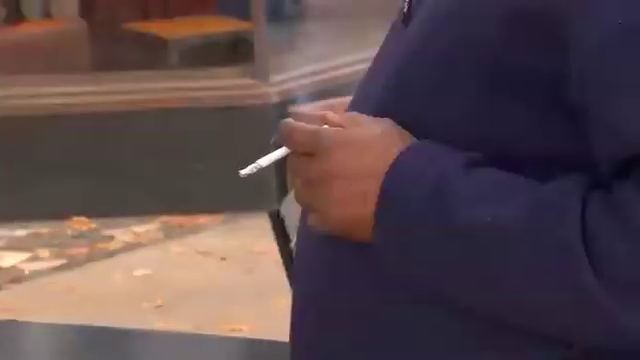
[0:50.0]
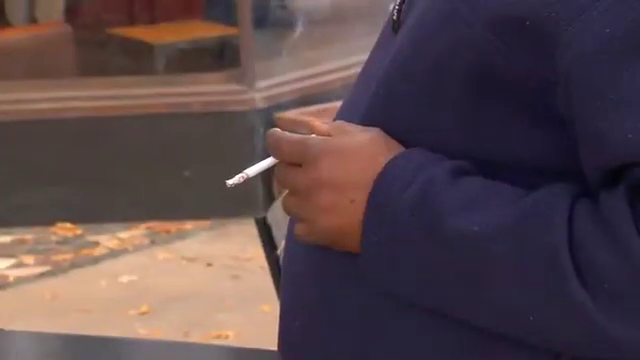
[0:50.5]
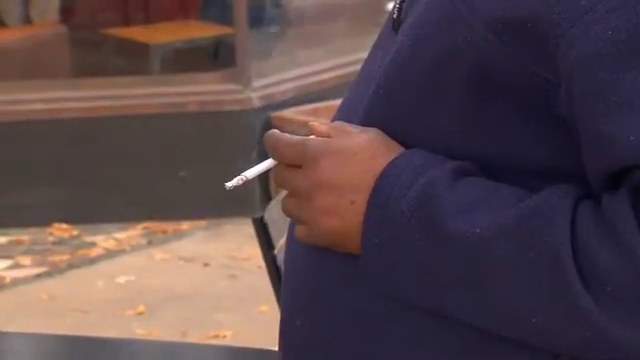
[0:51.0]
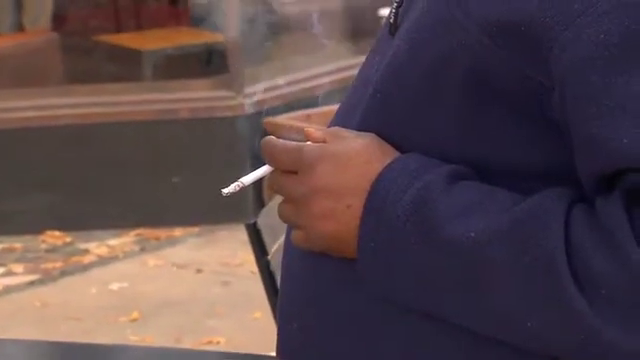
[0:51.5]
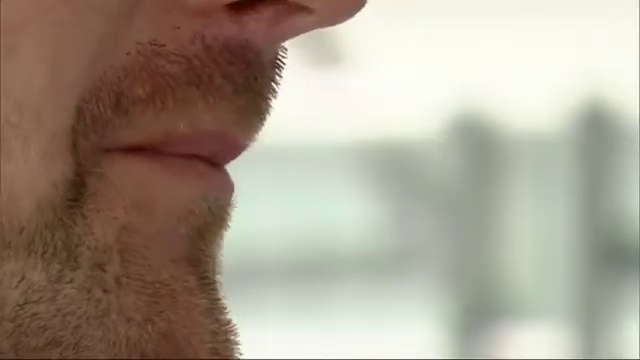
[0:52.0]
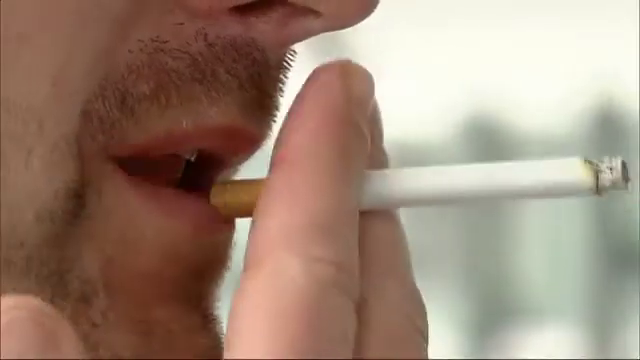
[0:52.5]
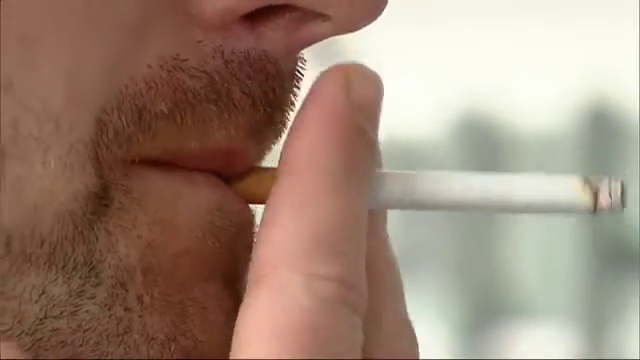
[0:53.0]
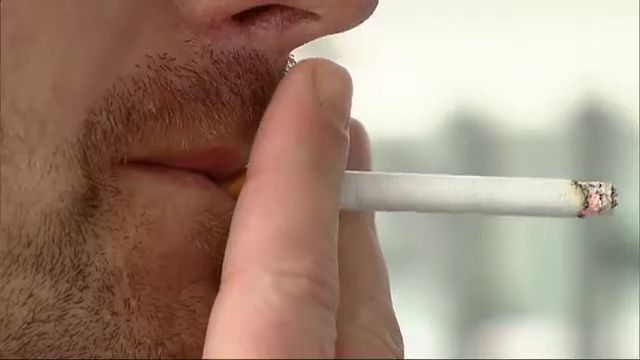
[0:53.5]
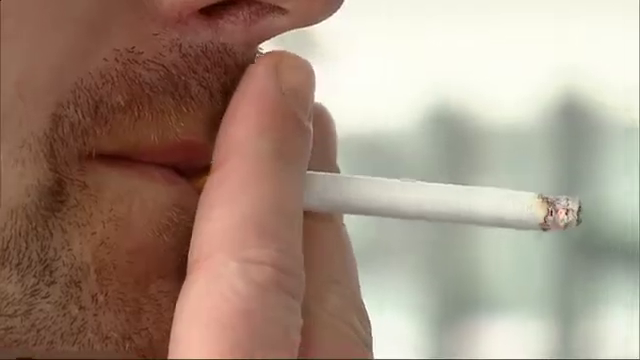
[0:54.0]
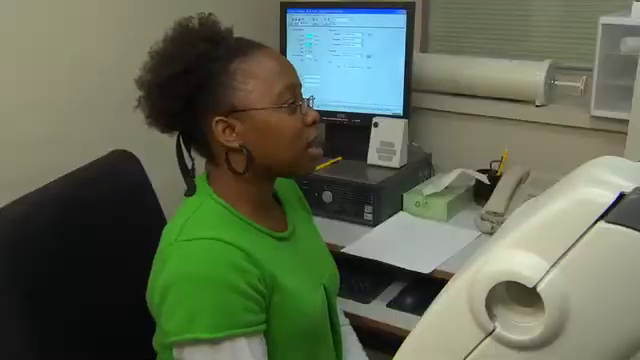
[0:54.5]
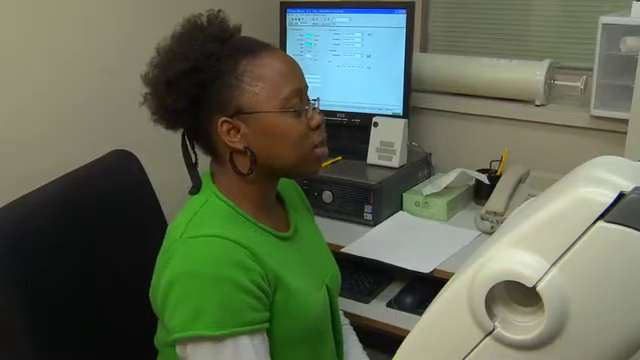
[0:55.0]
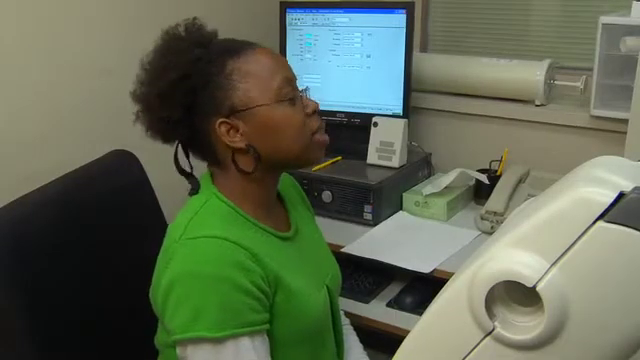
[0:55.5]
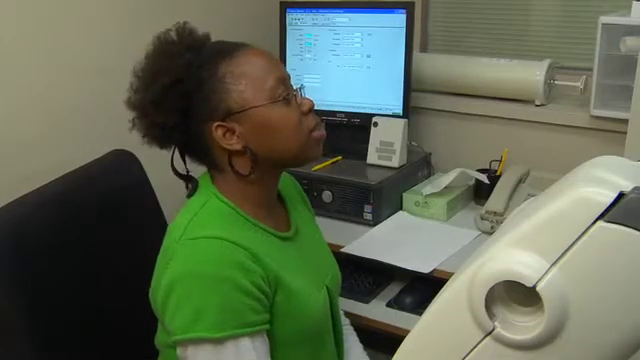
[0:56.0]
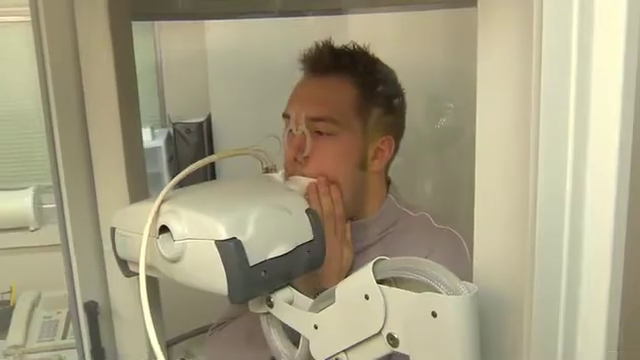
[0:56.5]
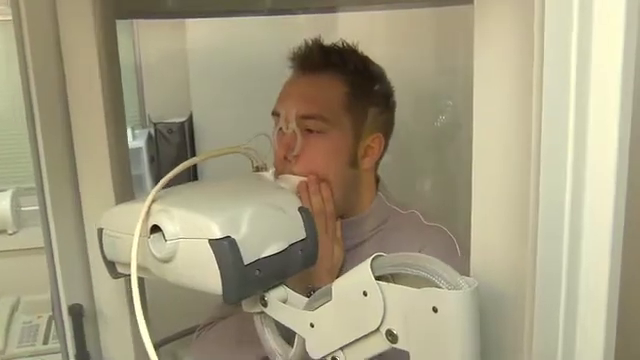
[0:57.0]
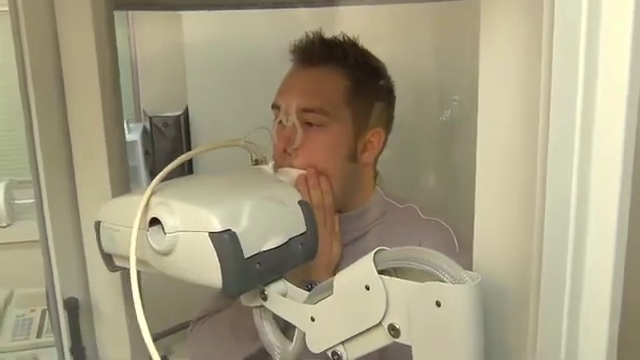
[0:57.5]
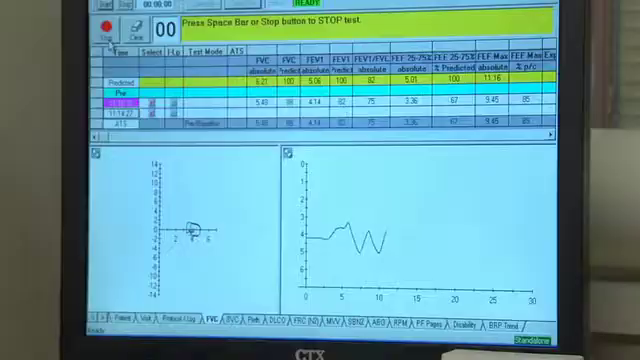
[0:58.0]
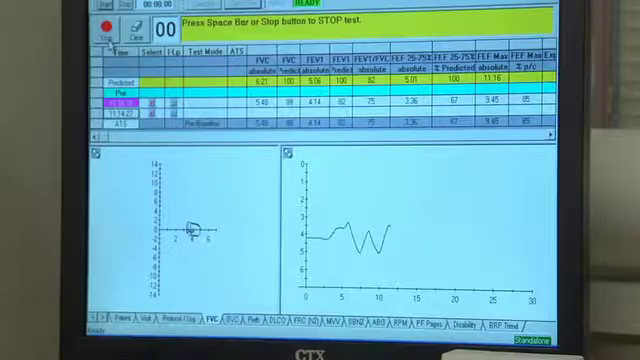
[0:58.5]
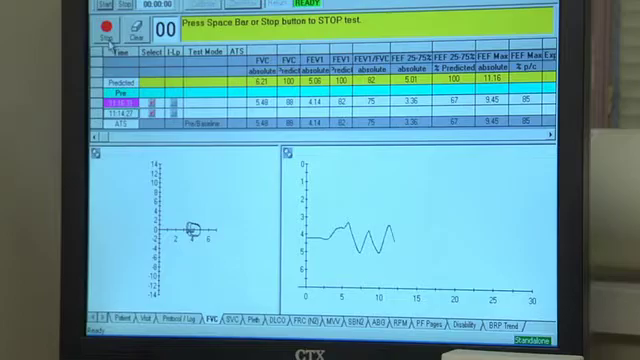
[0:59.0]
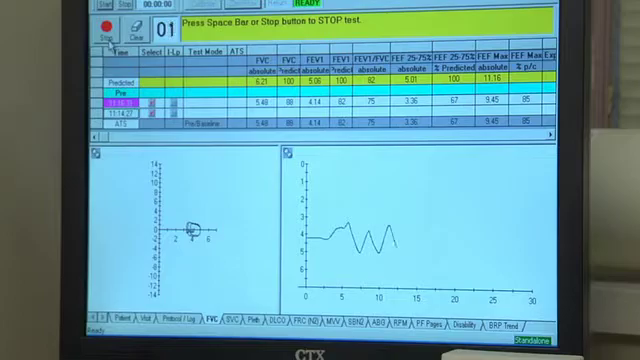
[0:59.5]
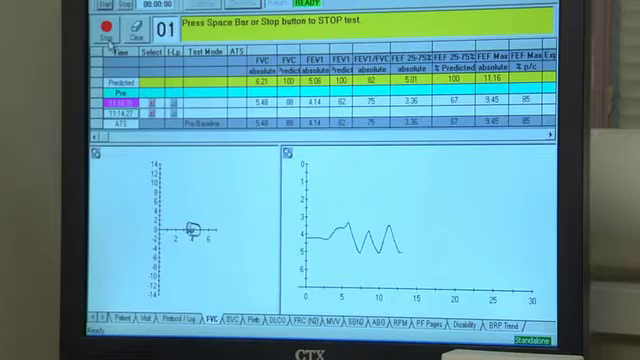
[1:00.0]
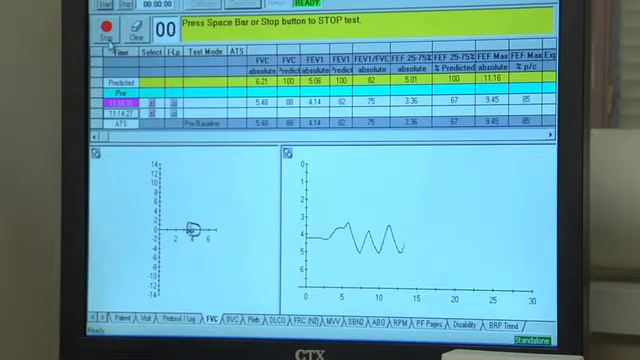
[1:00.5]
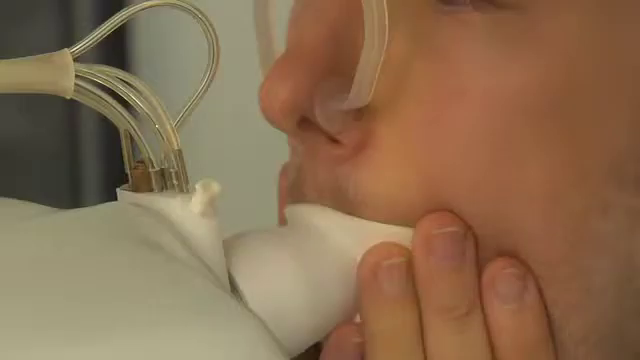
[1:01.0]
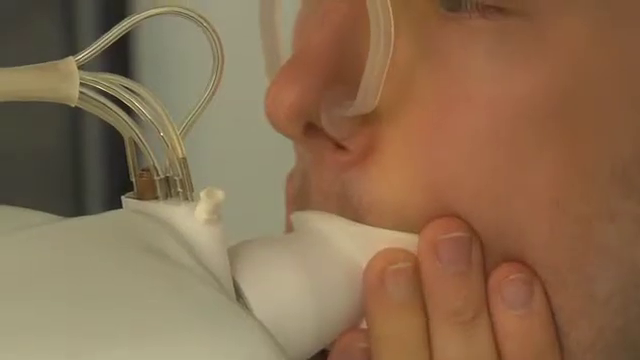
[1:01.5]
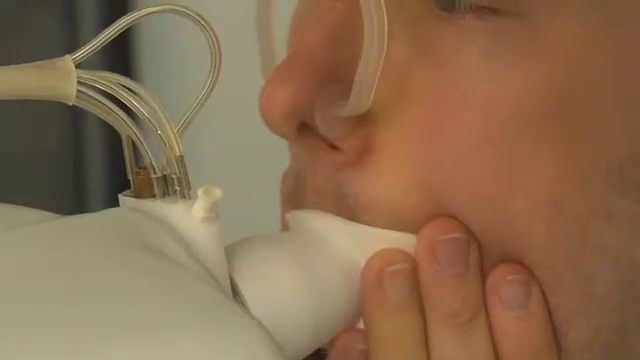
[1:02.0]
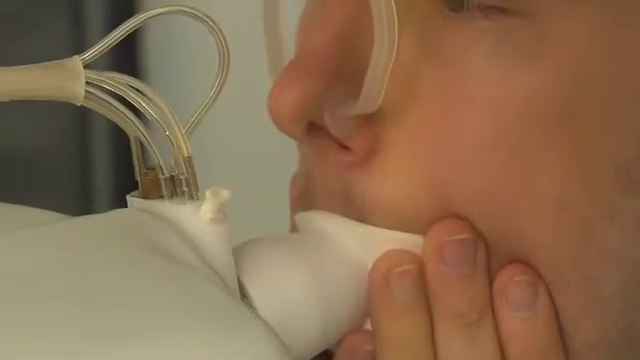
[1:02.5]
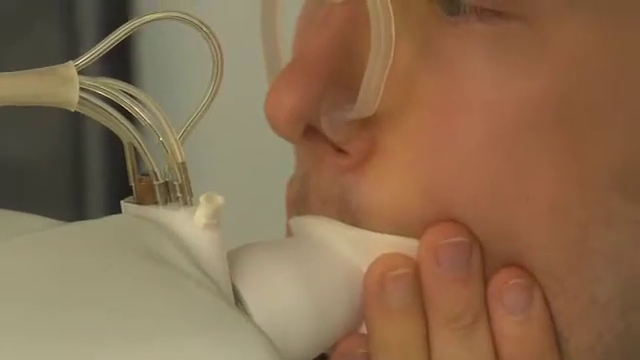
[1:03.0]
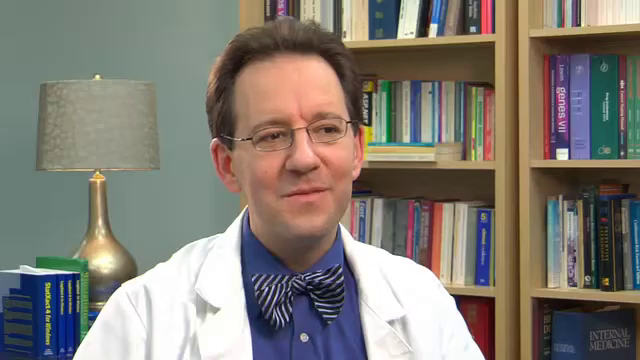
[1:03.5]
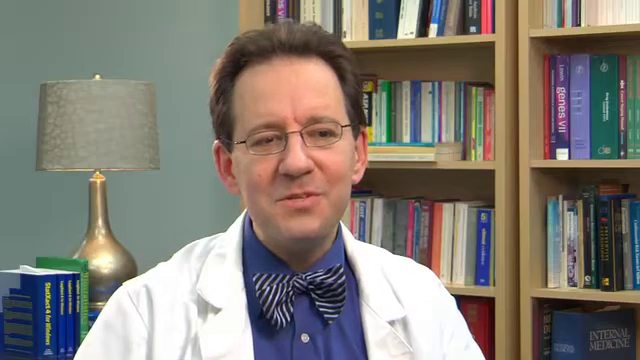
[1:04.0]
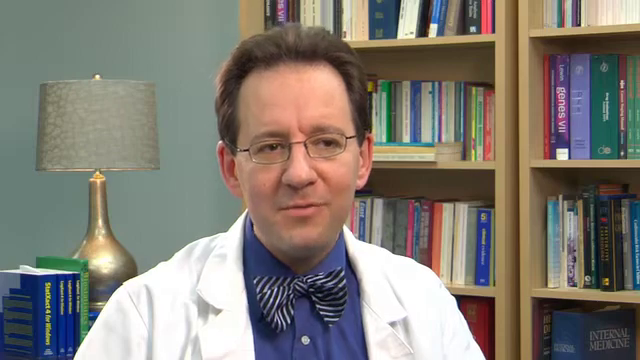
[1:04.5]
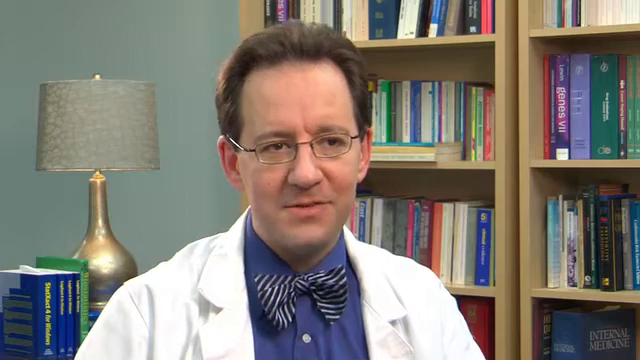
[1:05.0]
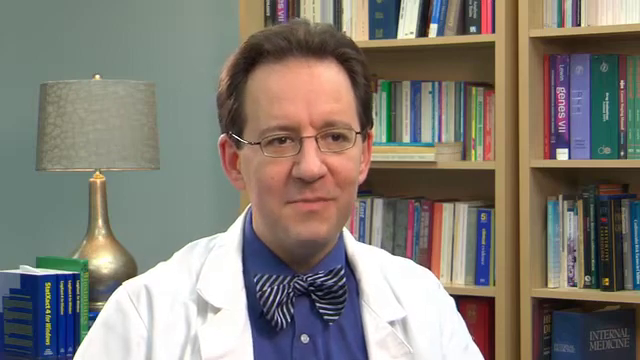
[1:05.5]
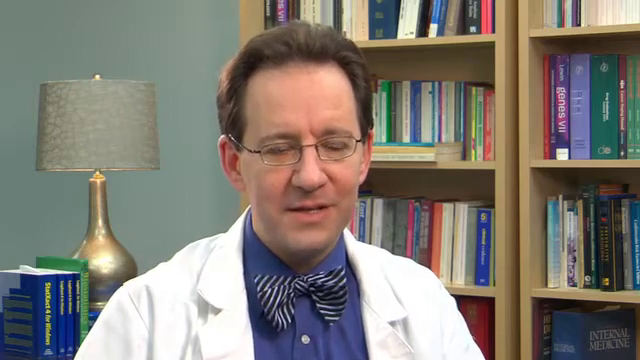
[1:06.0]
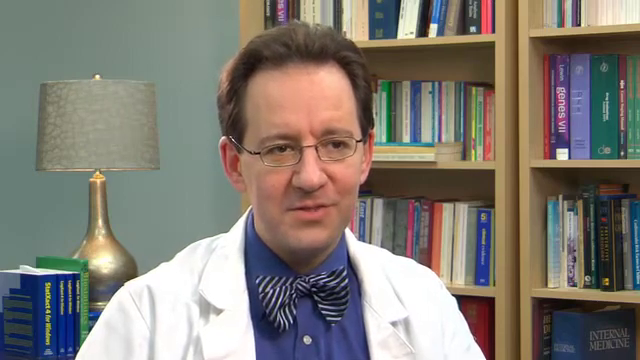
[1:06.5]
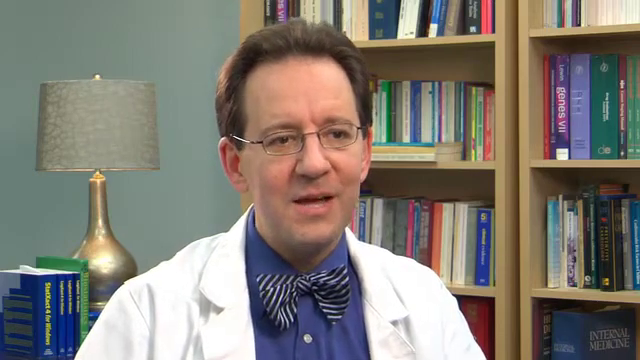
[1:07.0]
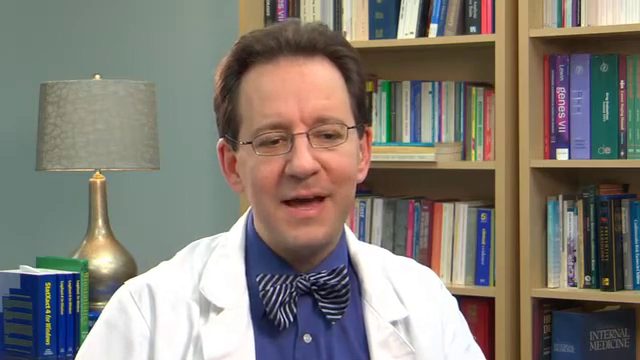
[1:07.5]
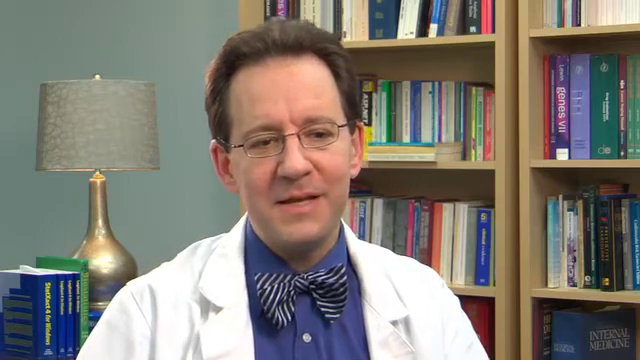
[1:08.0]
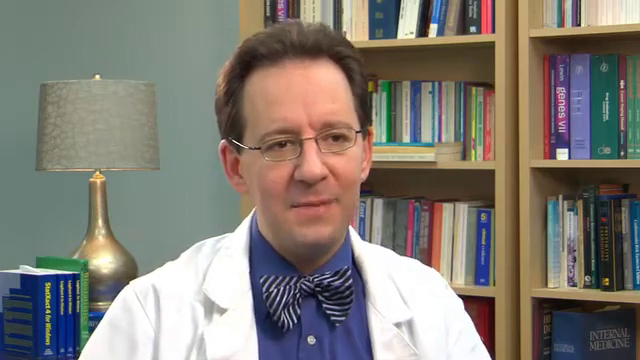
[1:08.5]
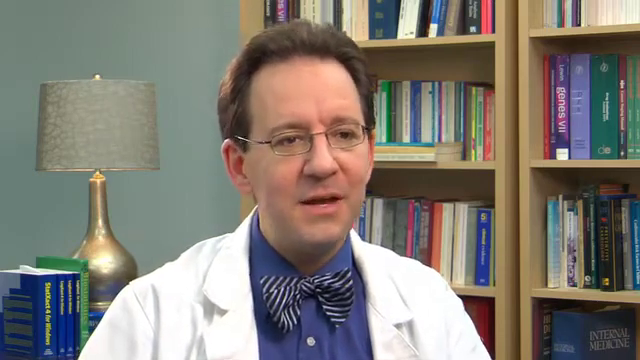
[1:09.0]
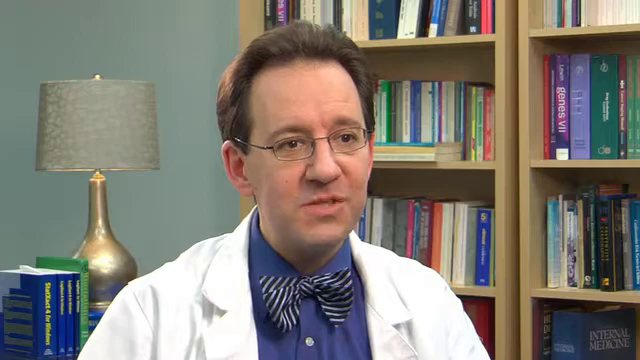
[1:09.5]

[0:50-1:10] A man is turned to the side, closer to the right side of the frame but facing toward the left. He appears to be overweight with a very large stomach and wears a long-sleeve blue shirt. His left arm is bent at the elbow, and he grasps a lit cigarette between his index and middle fingers, holding it close to his body. Next, only his face is visible, not his body; it looks like his face is now on the left side of the frame, facing right. He has placed the cigarette into his mouth and holds it up to his lips between his index and middle fingers, puffing on it as he smokes; the cigarette is lit. Next, a woman sits at a desk in an office in a black desk chair. She looks like she may be an administrative assistant or possibly a secretary, and her hair is pulled back in a bun.